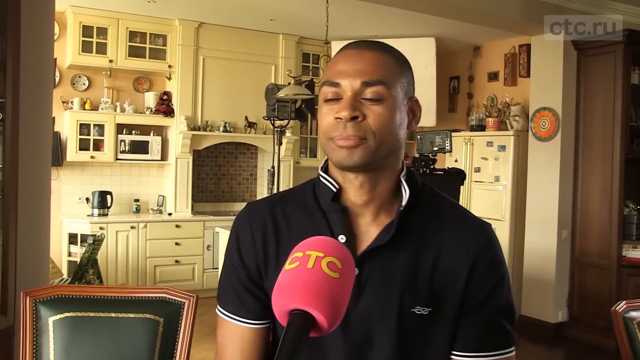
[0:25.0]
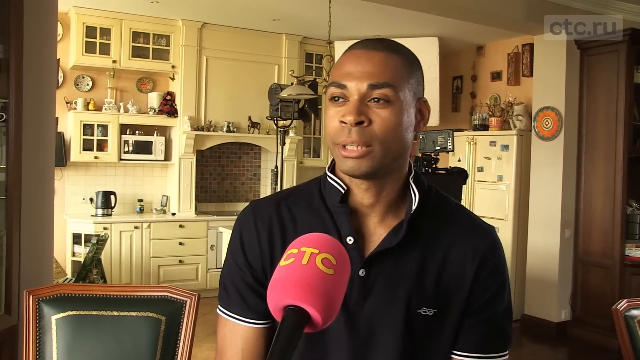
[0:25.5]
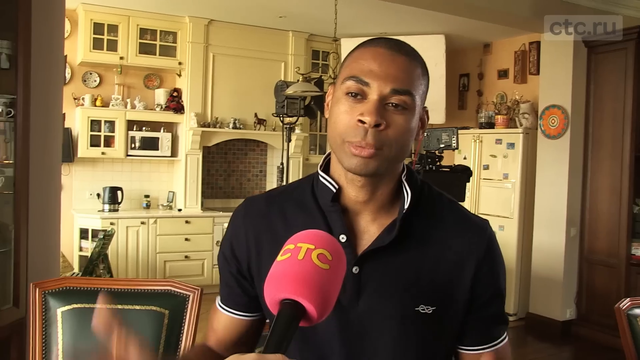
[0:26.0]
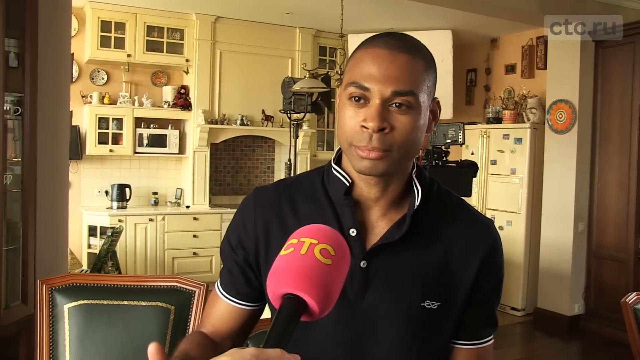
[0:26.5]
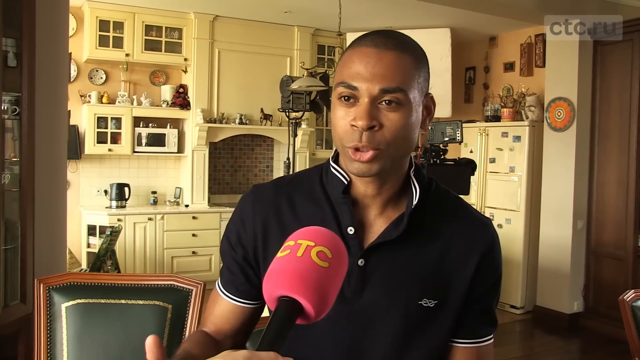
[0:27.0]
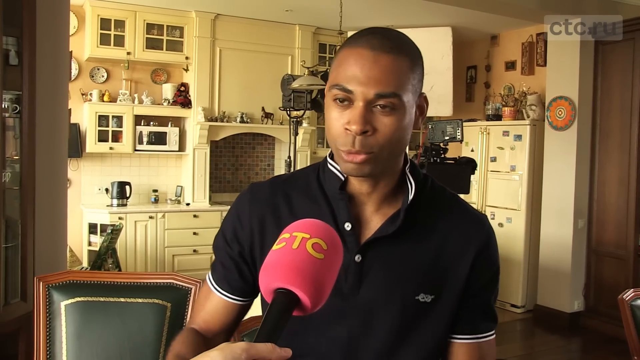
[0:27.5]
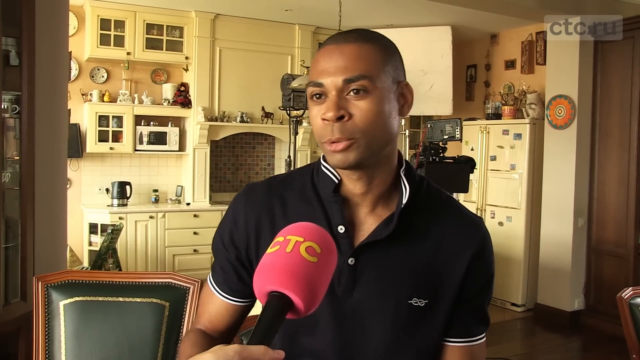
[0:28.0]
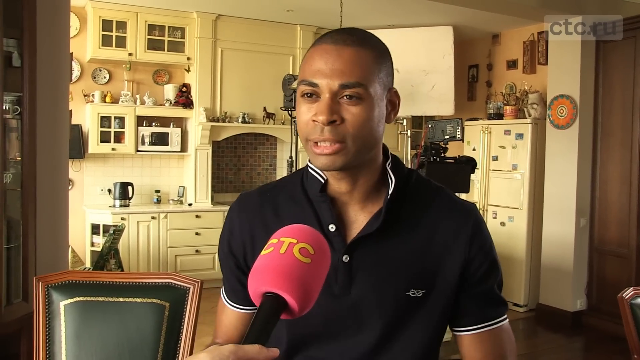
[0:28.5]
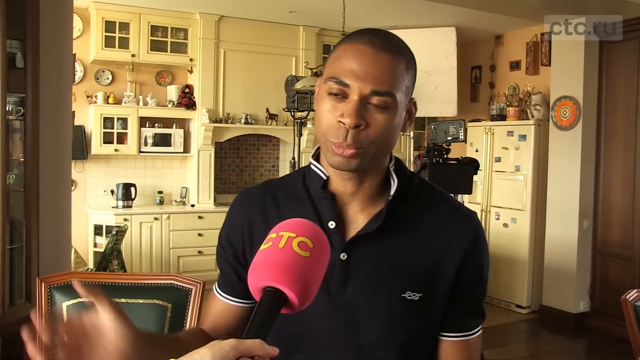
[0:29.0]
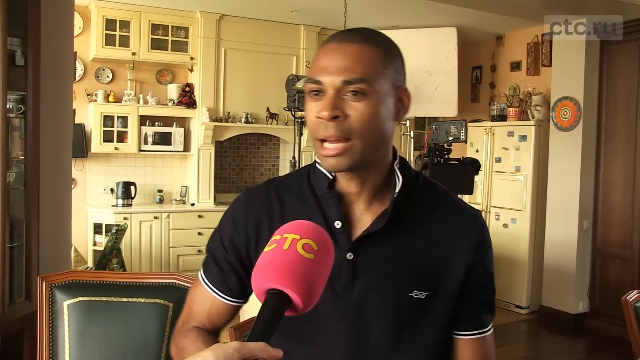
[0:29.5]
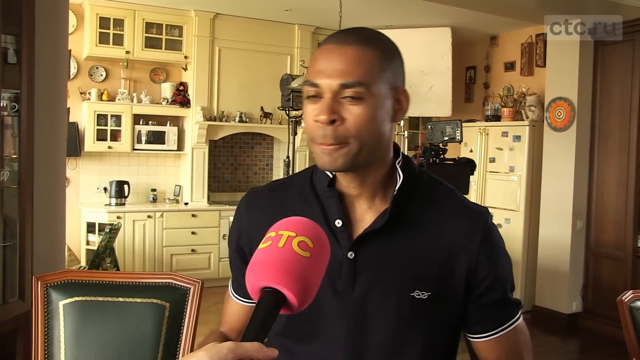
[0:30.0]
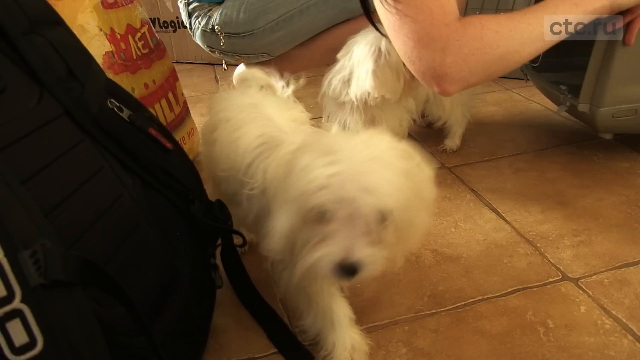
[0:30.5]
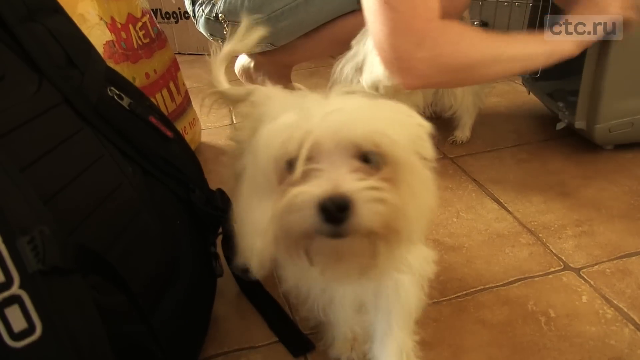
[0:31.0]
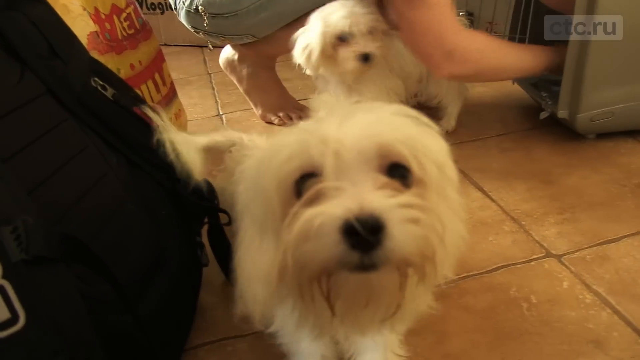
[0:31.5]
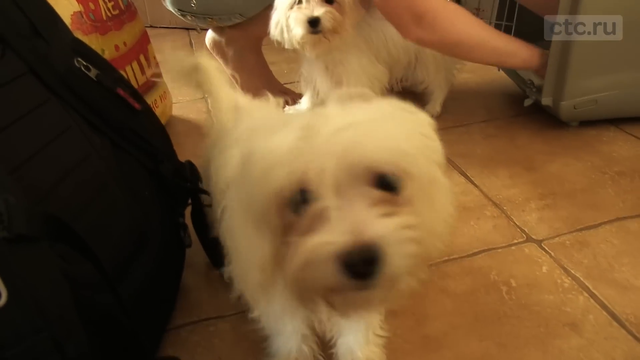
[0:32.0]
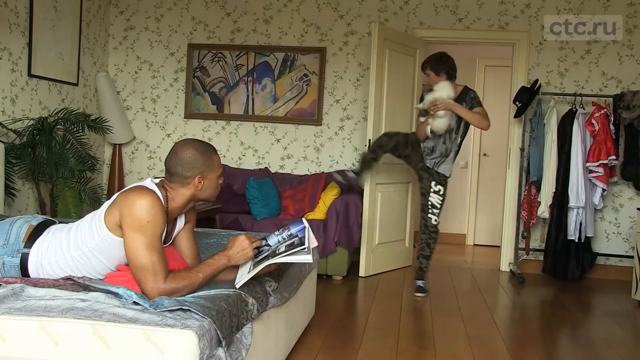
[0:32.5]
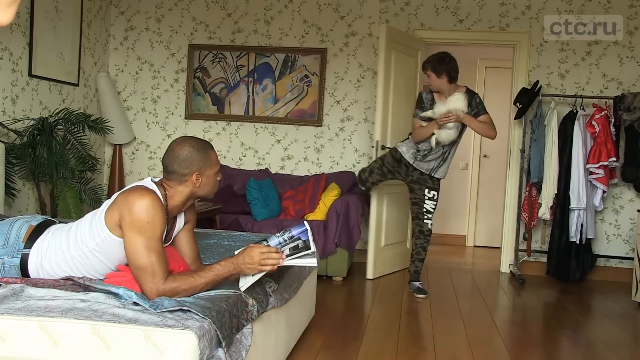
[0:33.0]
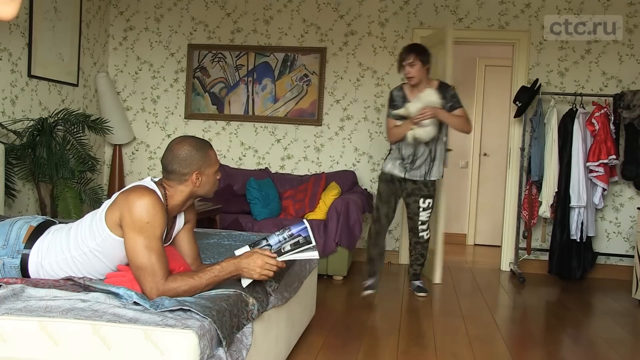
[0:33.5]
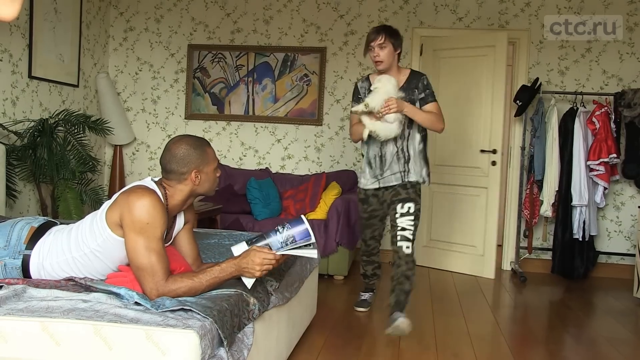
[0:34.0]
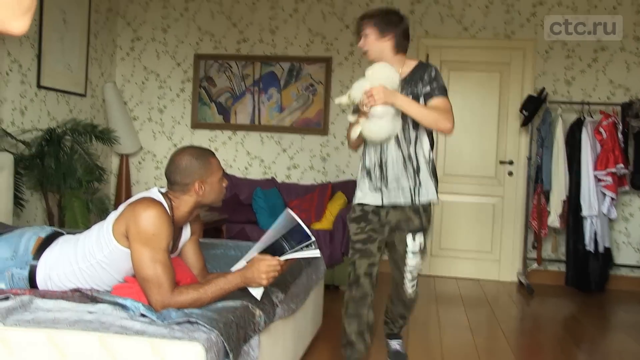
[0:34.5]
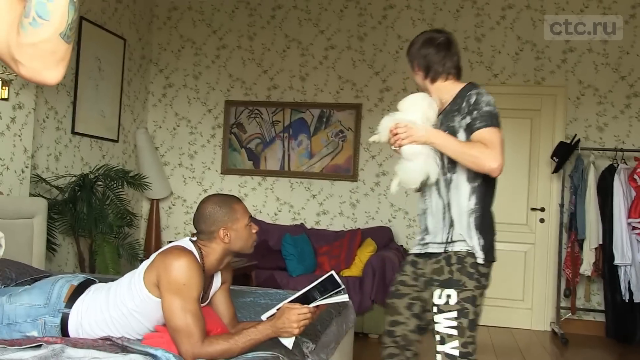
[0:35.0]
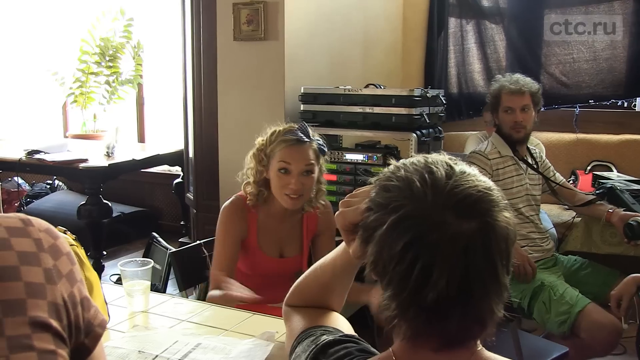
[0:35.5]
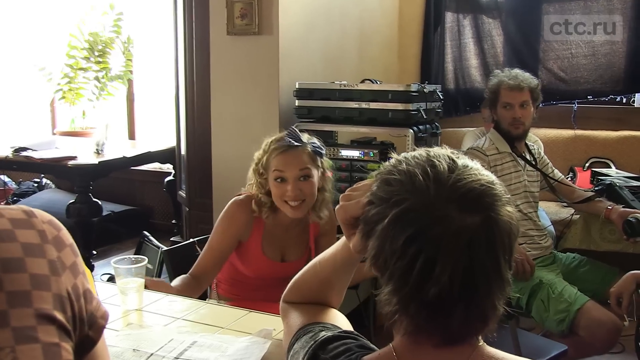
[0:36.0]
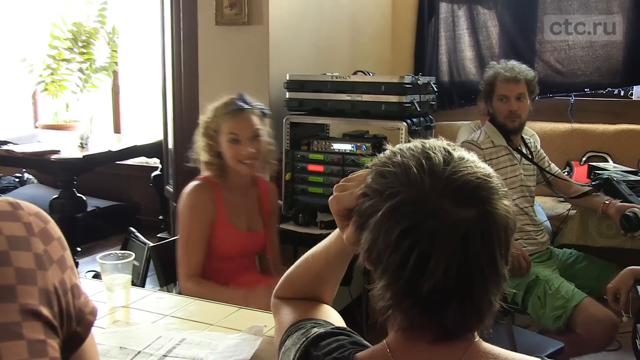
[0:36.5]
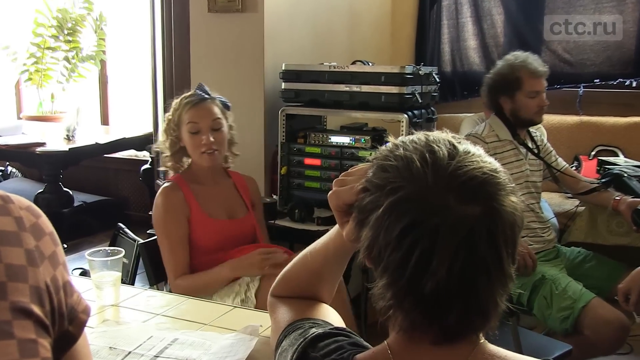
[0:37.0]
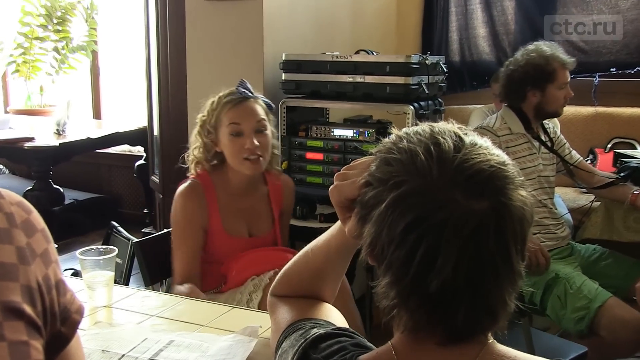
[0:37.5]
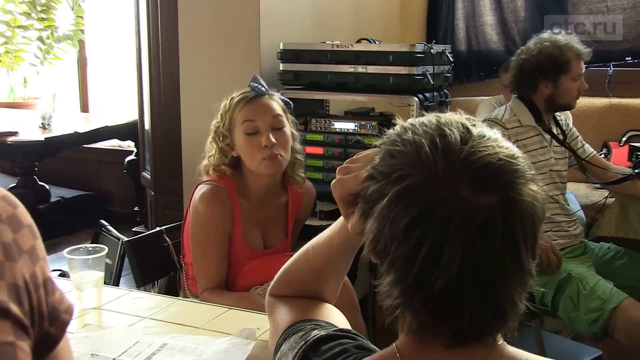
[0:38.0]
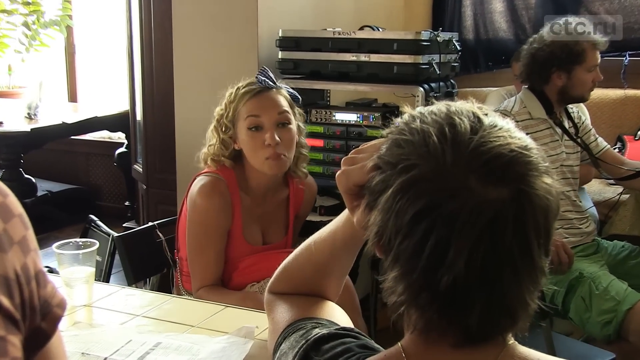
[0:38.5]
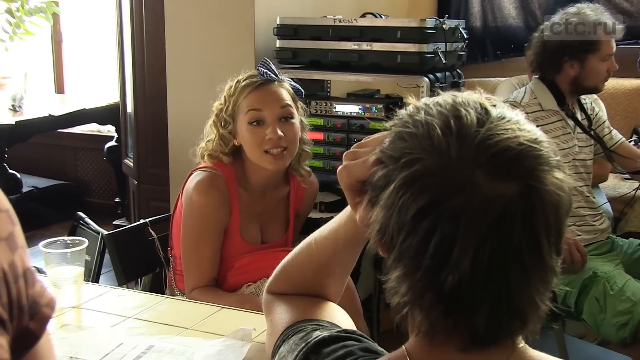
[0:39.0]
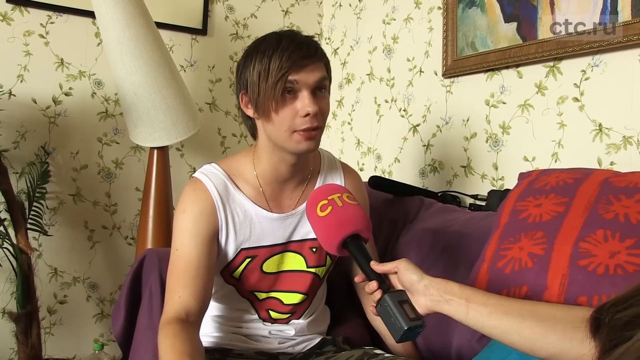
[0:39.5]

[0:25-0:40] The interview with the black man in the black shirt continues, with a pink CTC microphone. Two white dogs appear, and a white guy in sweatpants holds a dog. The blonde girl is shown, followed by a white guy with a Russian name who wears a Superman shirt; the CTC microphone interviews him. A guy sitting on a couch is interviewed in what is apparently behind-the-scenes footage. There is a dog, someone is on the bed reading a magazine, and a guy shuts the door. A girl talks to somebody, apparently not as part of the show but in behind-the-scenes footage.